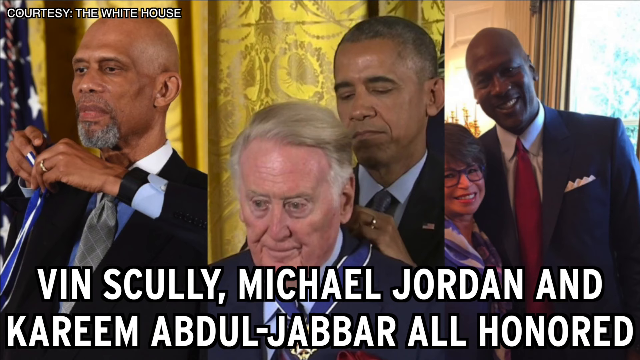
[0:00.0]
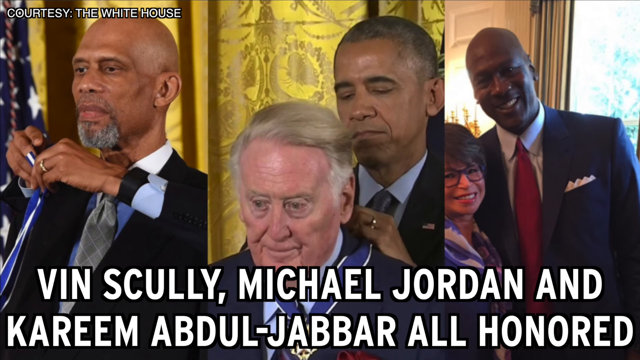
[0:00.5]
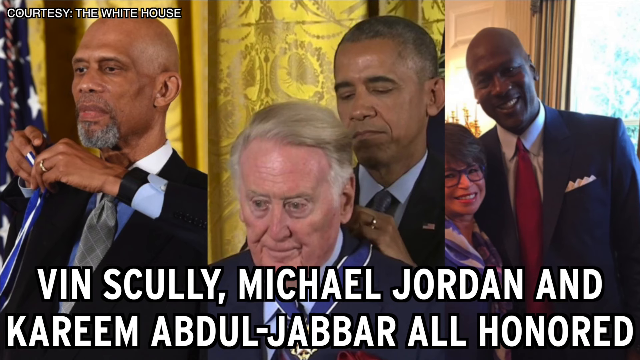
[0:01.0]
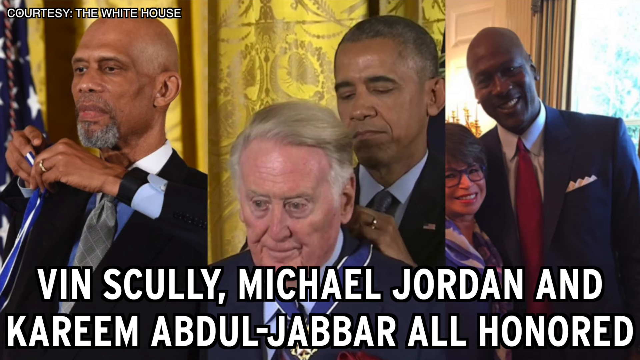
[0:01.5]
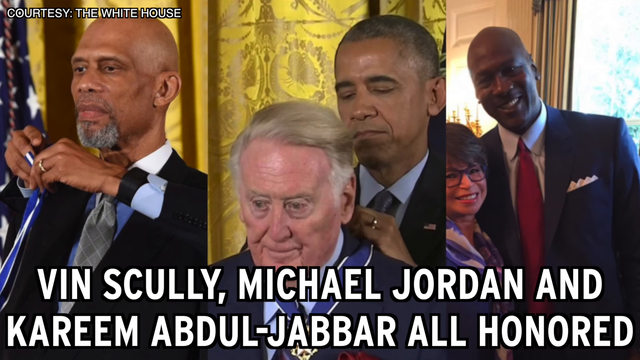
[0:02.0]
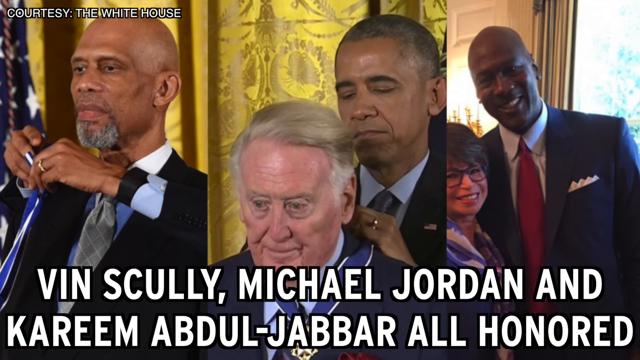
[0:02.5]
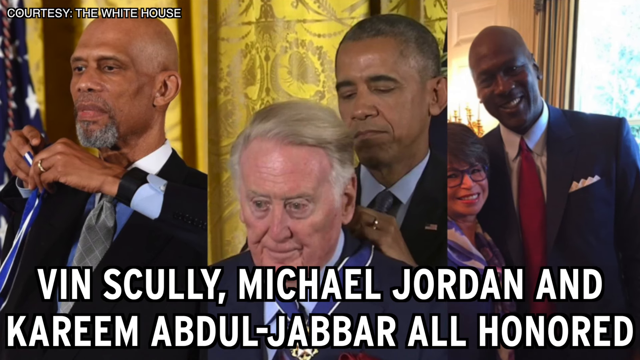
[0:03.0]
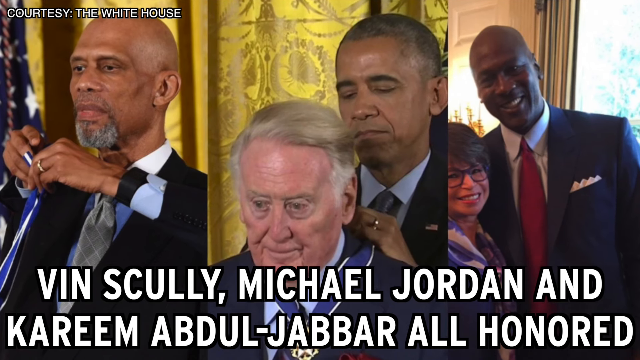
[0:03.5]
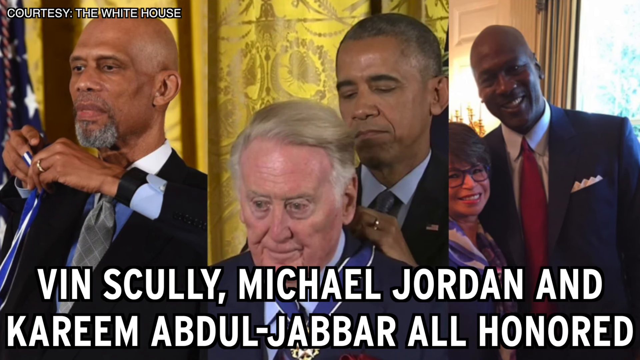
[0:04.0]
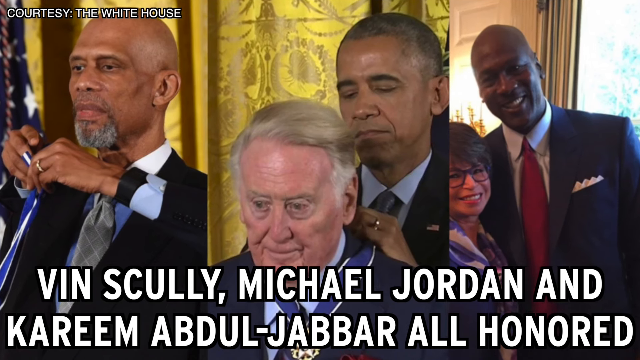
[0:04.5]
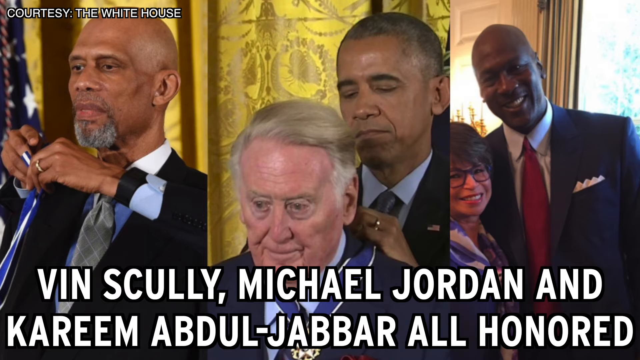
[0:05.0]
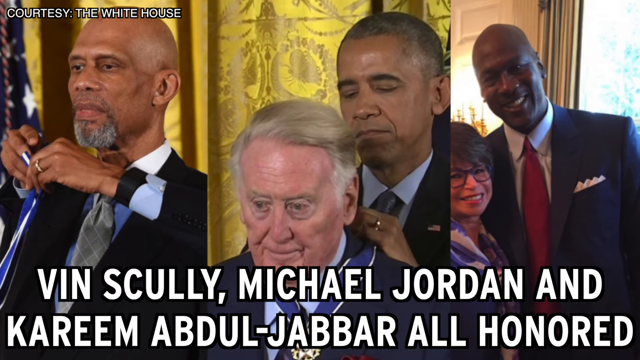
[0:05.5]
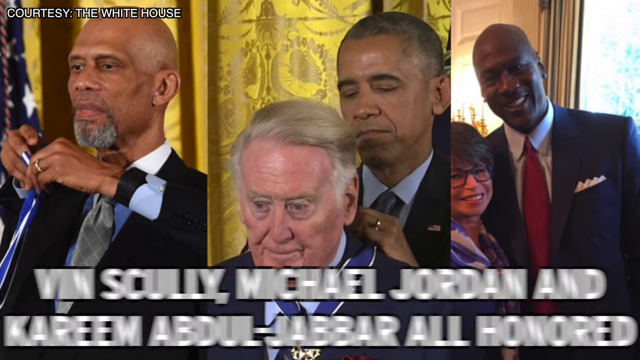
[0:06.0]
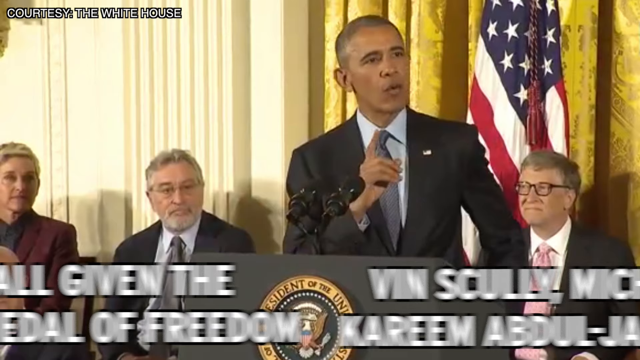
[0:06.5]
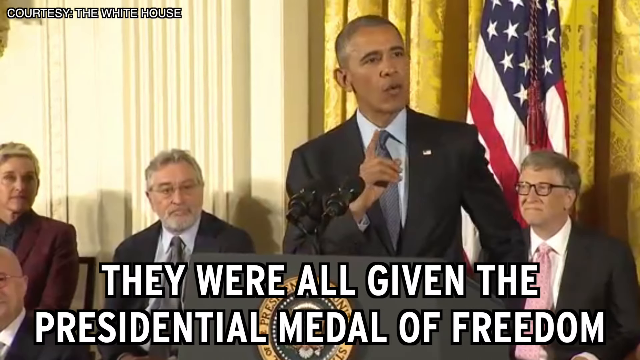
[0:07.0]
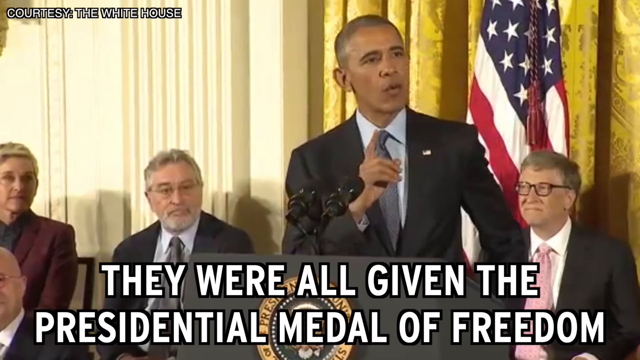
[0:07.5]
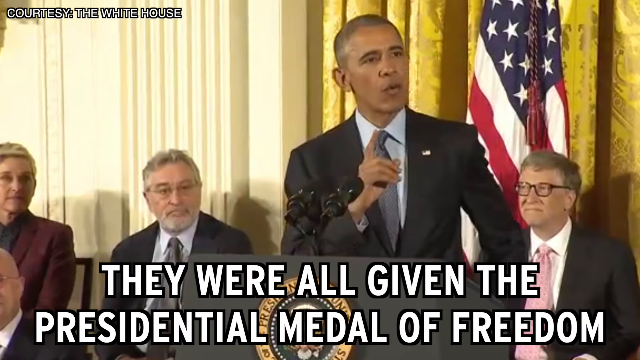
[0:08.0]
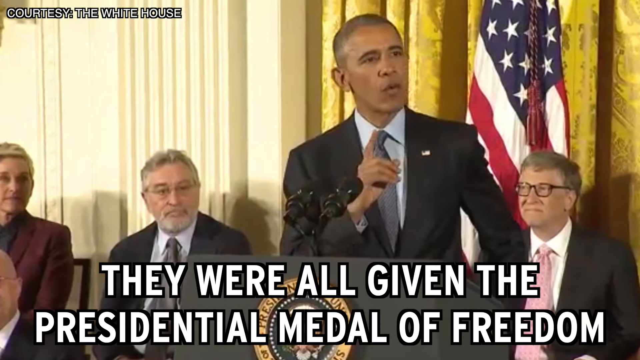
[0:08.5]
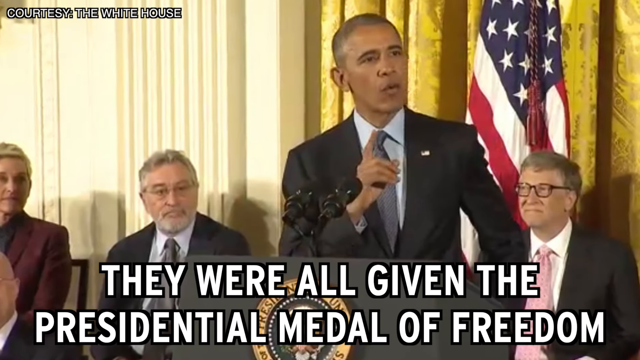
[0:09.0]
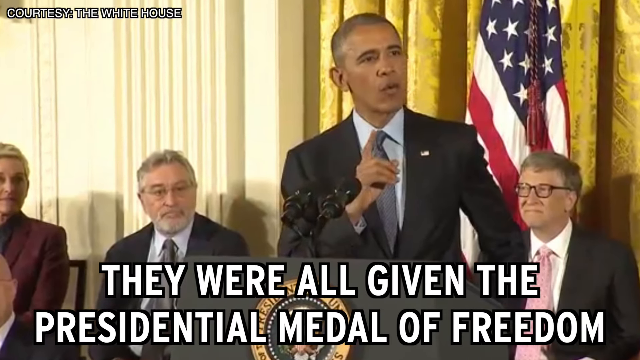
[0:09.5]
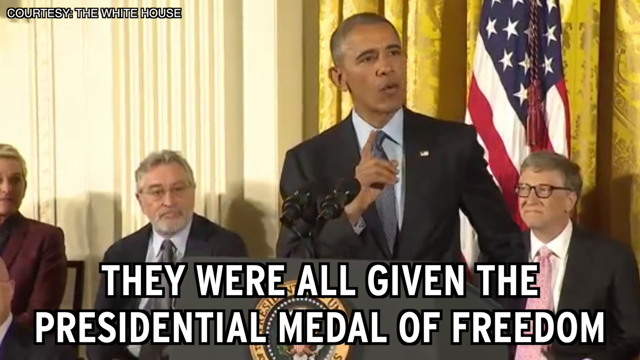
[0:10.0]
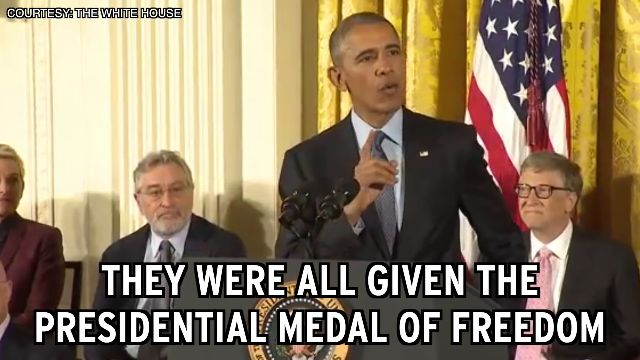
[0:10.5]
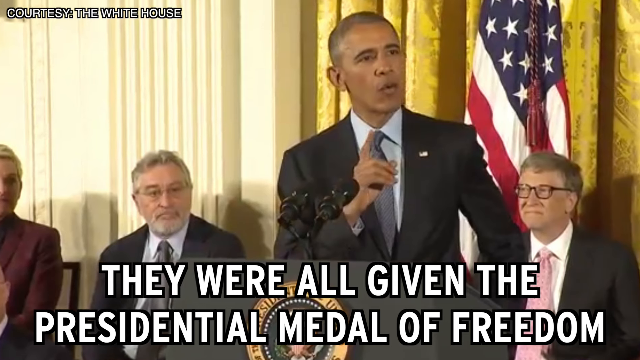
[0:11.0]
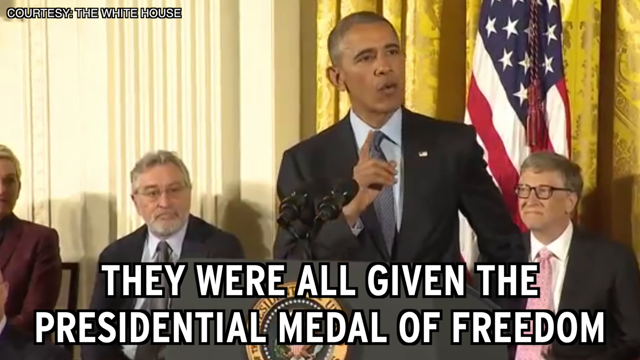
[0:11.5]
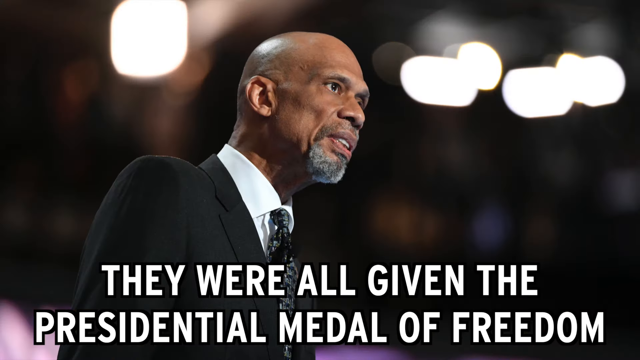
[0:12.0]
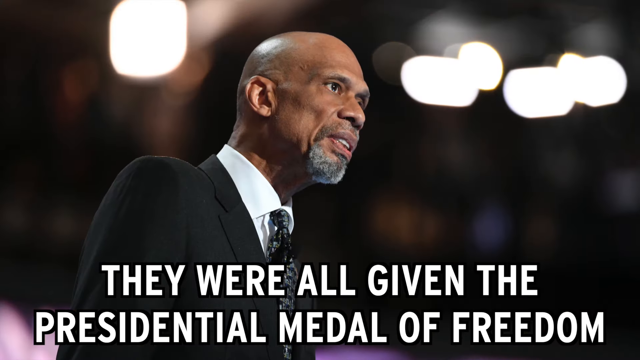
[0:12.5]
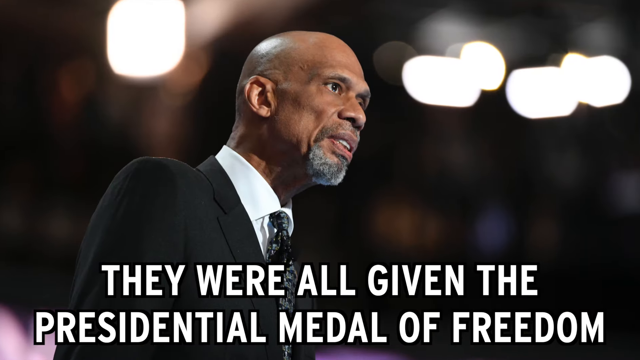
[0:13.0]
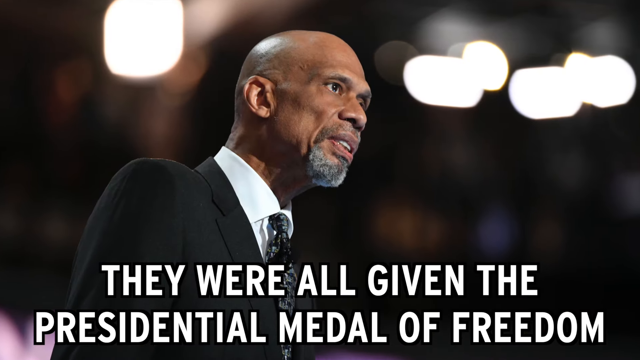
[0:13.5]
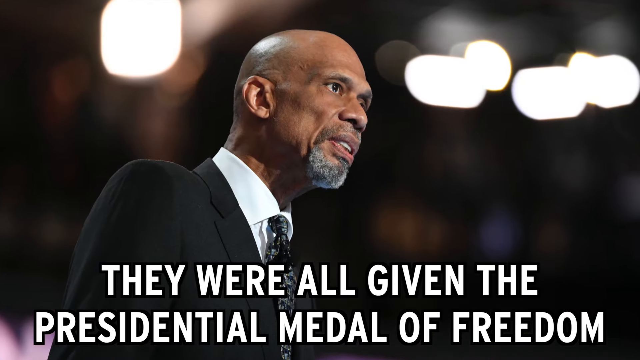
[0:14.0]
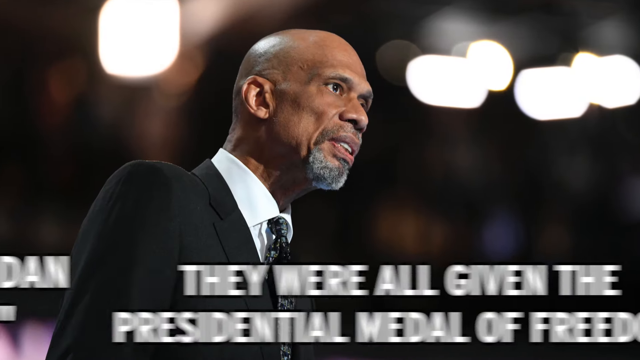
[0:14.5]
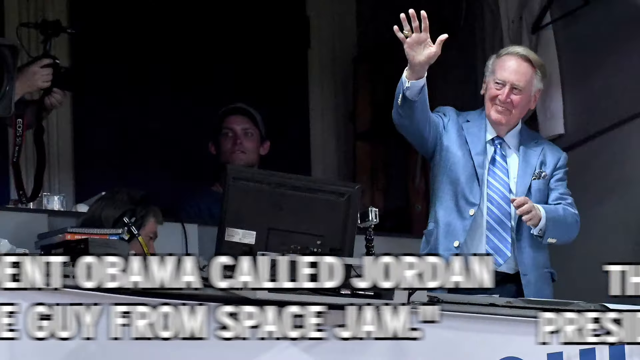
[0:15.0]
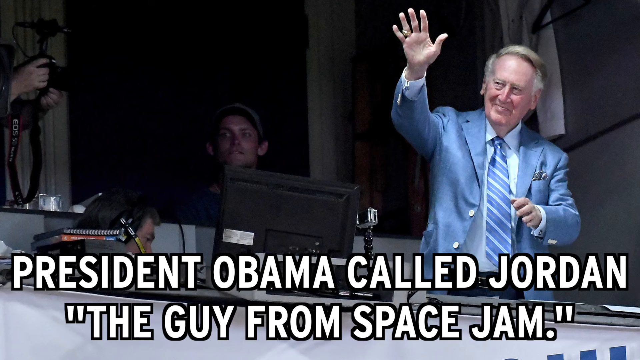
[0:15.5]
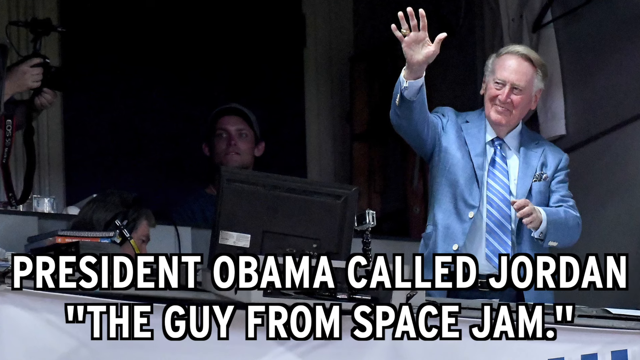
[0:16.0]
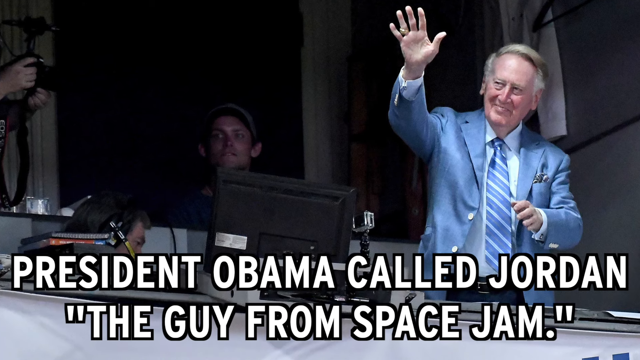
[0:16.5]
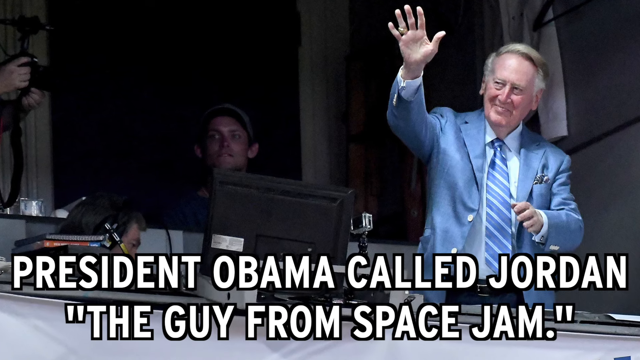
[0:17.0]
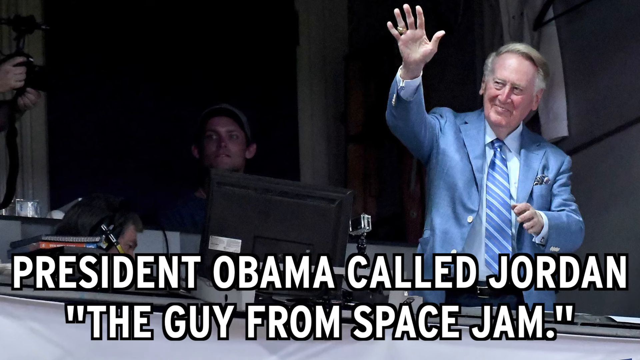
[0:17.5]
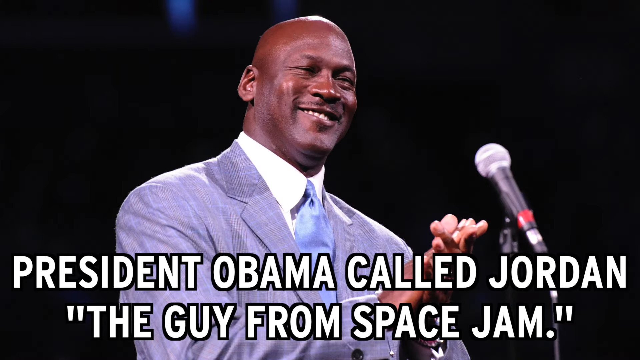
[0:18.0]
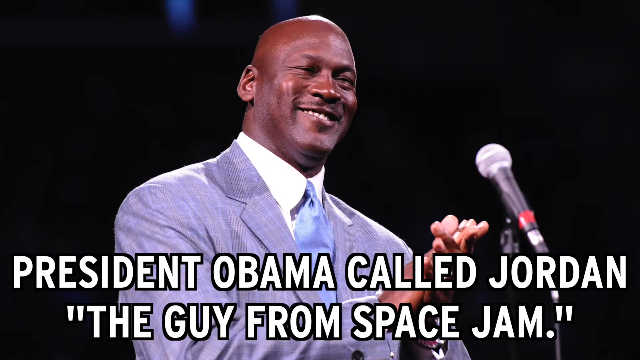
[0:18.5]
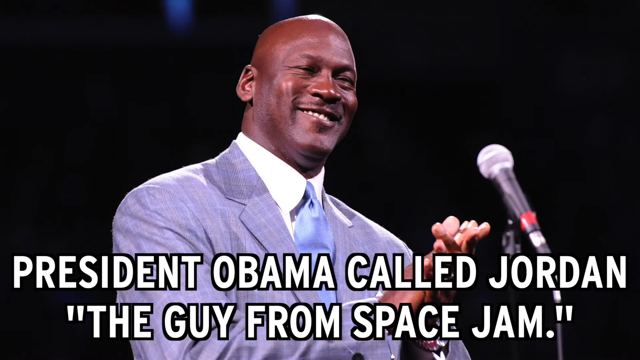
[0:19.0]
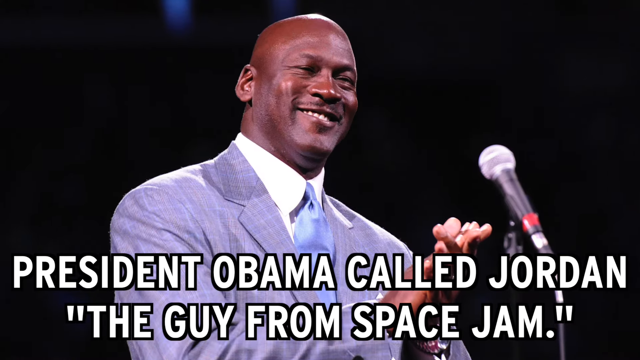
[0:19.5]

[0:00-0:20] Three video insets appear, labeled with names in white capital letters: Vin Scully, Michael Jordan and Kareem Abdul-Jabbar, all honored; the footage is courtesy of the White House. On the left, Kareem Abdul-Jabbar wears a suit, a gray tie and a blue shirt; he has a bald head and a beard. In the center, President Obama stands in front of a gold curtain with some decorations on it, putting the Medal of Honor around Vin Scully, an old man with white hair wearing a blue suit. The third shows Michael Jordan in a suit and a red tie, standing in front of a window whose curtains have been drawn open. Text then reads "they were all given the Presidential Medal of Freedom." President Obama stands in front of a lectern with a microphone in front of him, his right hand raised and his index finger pointing forward. He wears a suit with a gray tie. To his left is Bill Gates, and to his right are Ellen DeGeneres and the actor Robert De Niro. In the back are the gold curtain with decorations and the U.S. flag.